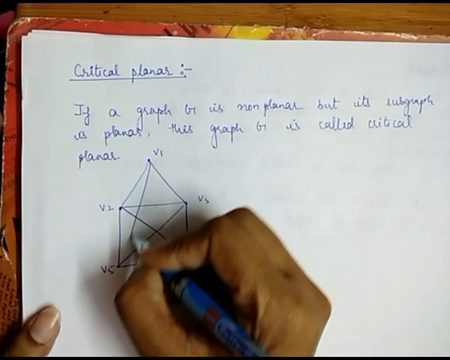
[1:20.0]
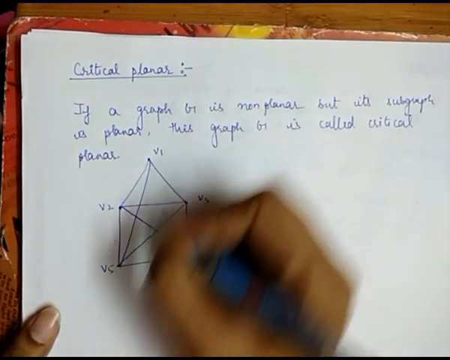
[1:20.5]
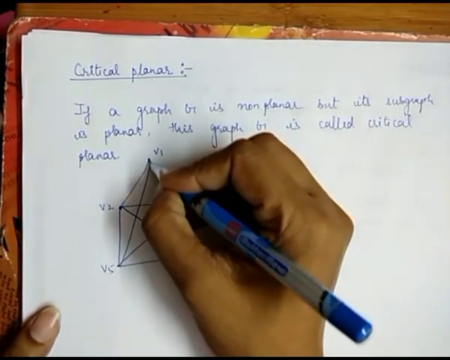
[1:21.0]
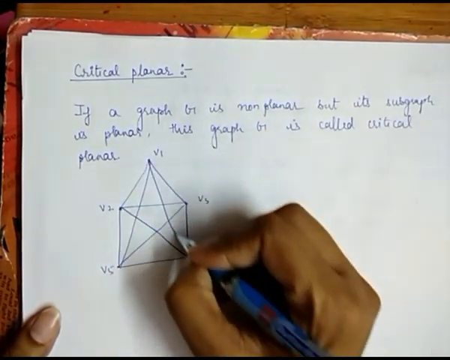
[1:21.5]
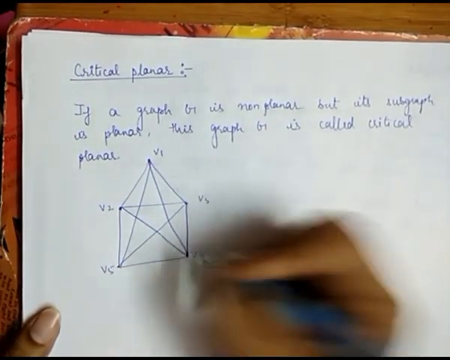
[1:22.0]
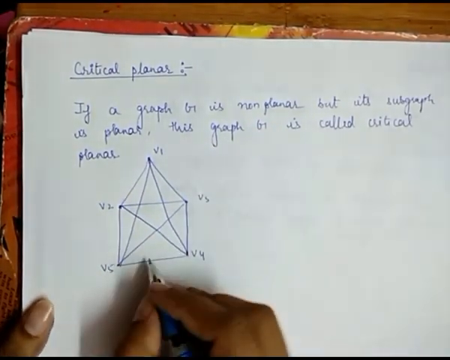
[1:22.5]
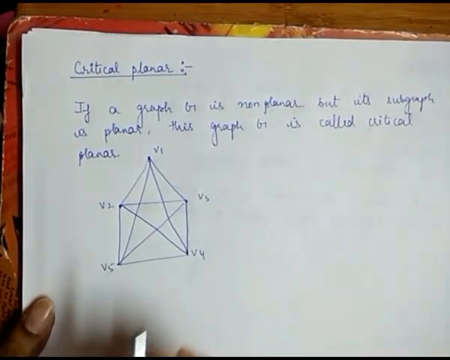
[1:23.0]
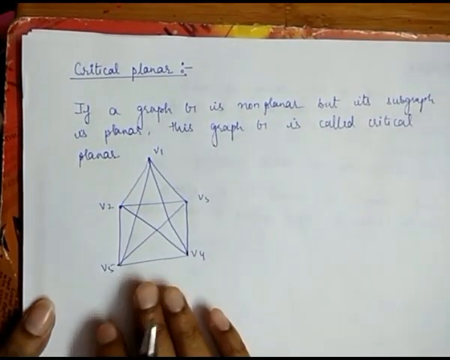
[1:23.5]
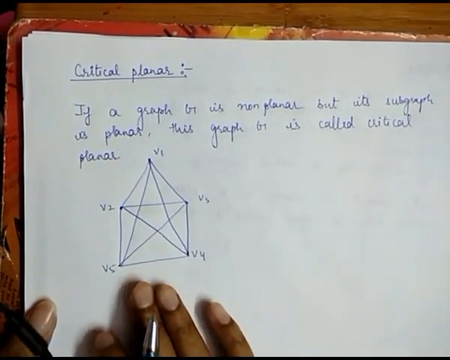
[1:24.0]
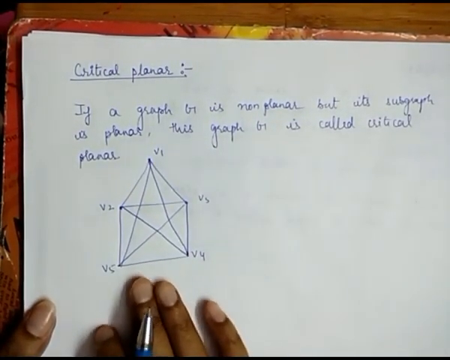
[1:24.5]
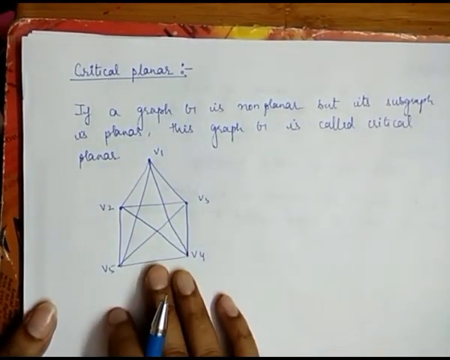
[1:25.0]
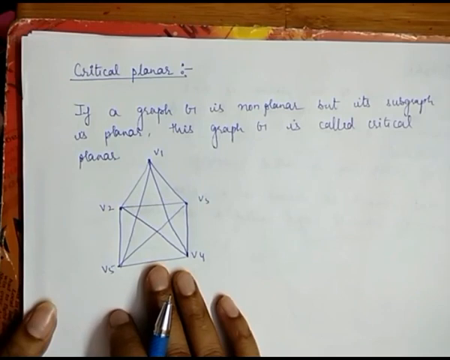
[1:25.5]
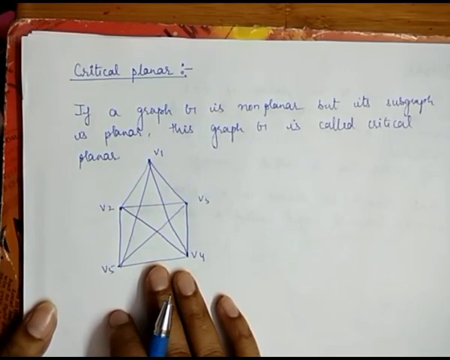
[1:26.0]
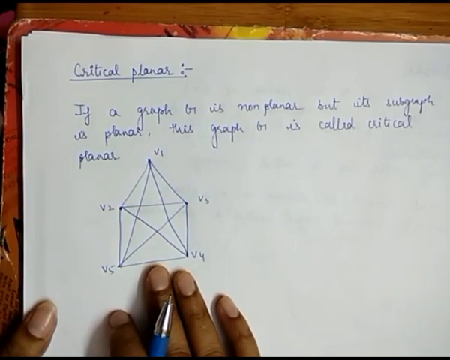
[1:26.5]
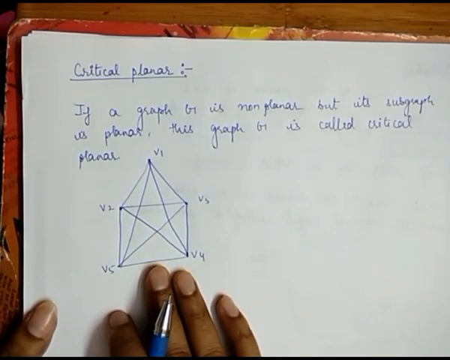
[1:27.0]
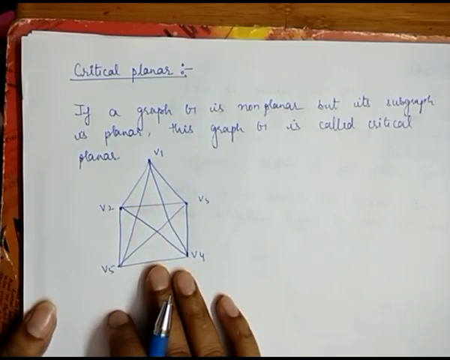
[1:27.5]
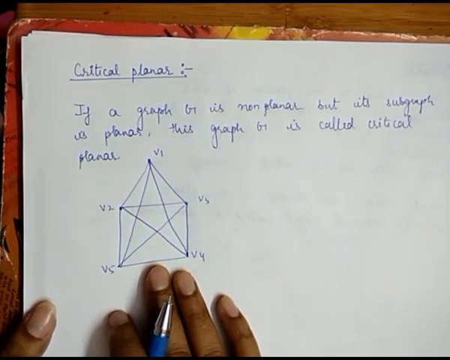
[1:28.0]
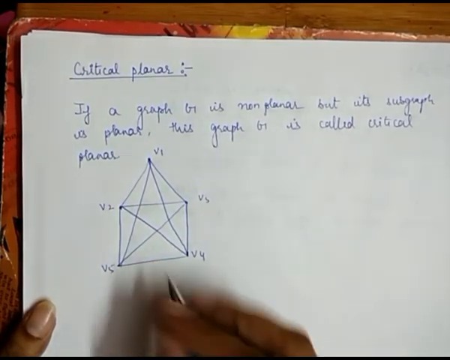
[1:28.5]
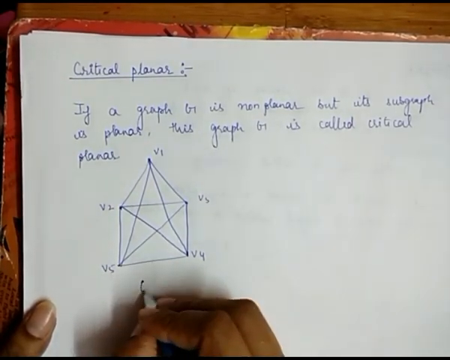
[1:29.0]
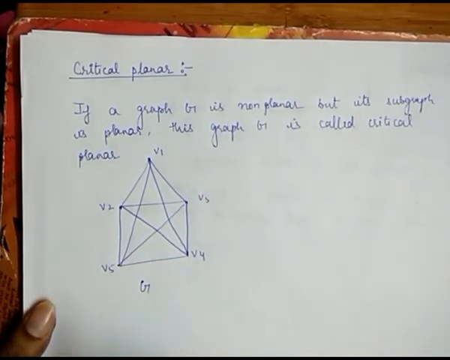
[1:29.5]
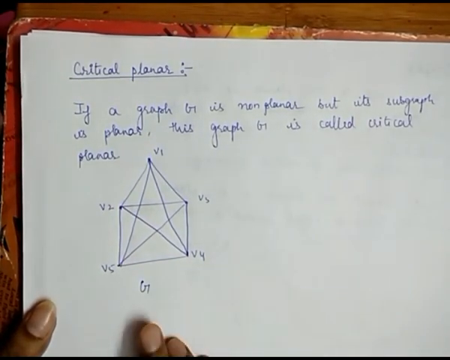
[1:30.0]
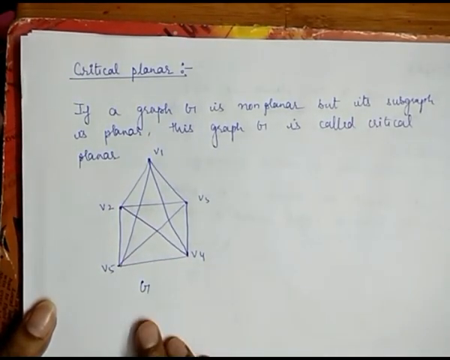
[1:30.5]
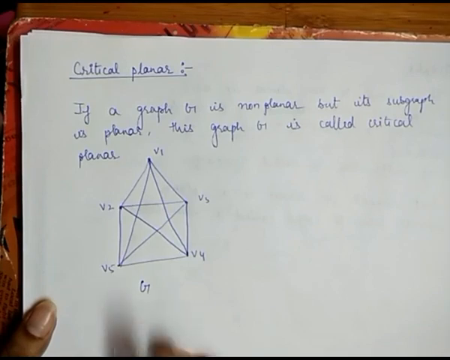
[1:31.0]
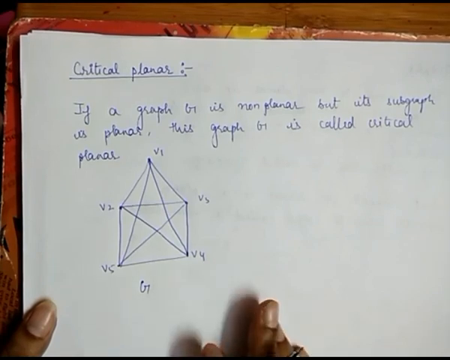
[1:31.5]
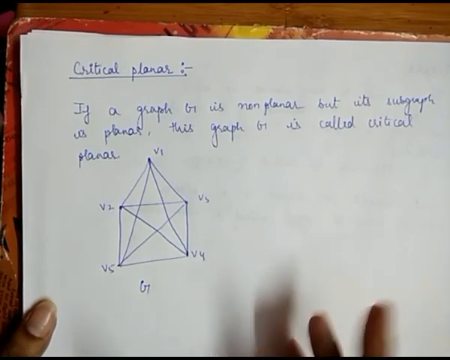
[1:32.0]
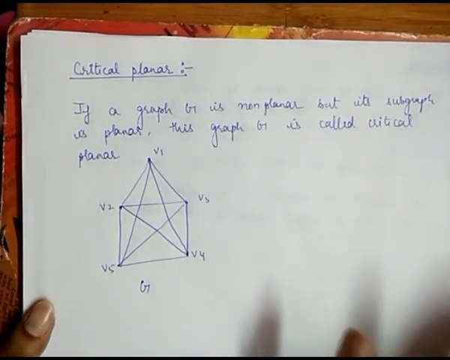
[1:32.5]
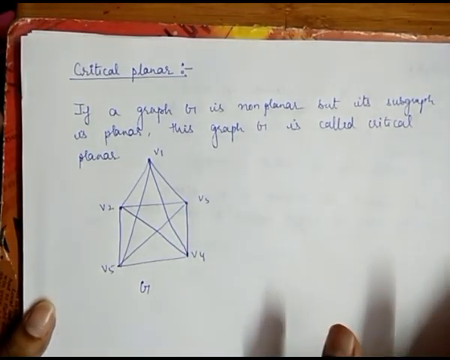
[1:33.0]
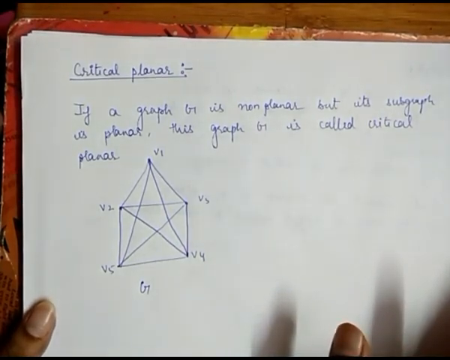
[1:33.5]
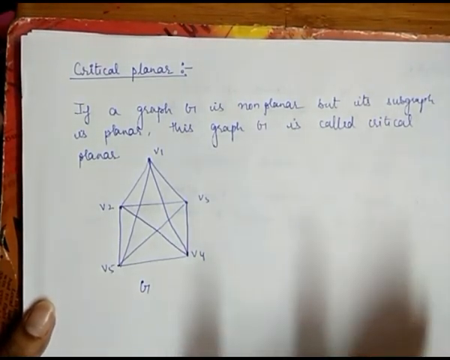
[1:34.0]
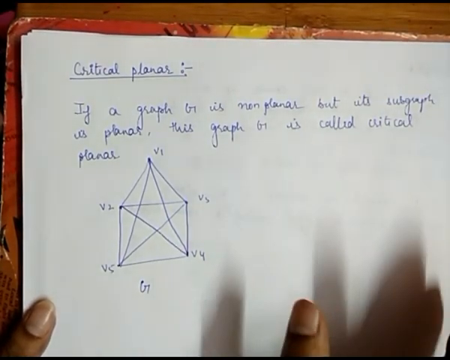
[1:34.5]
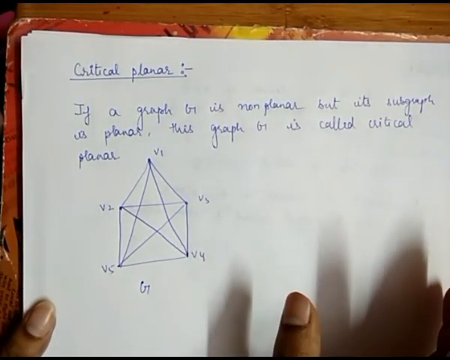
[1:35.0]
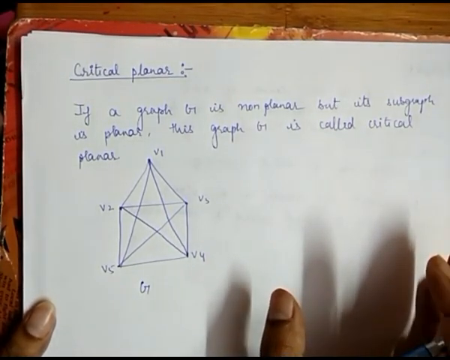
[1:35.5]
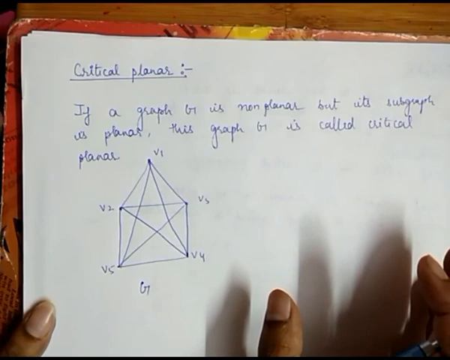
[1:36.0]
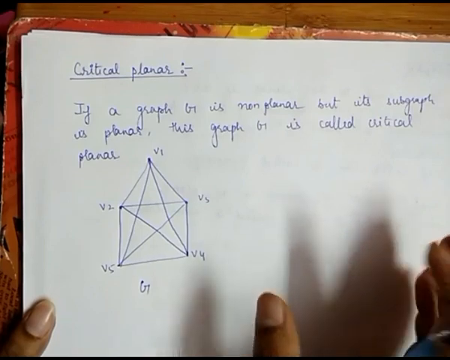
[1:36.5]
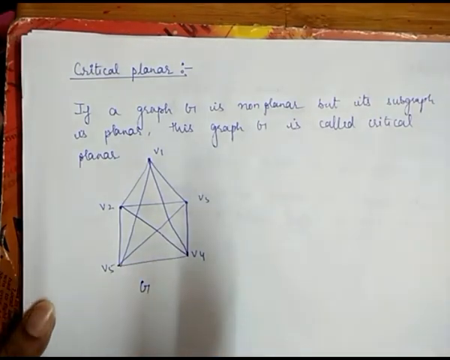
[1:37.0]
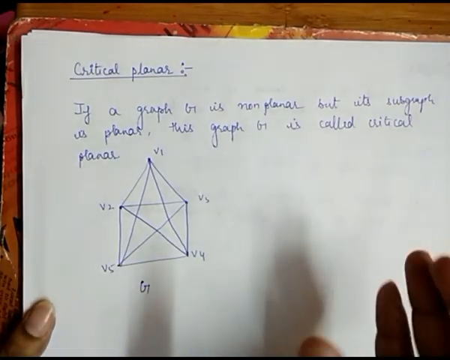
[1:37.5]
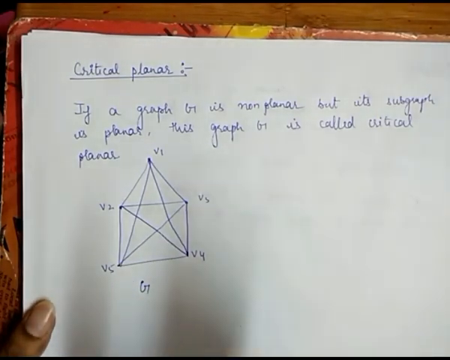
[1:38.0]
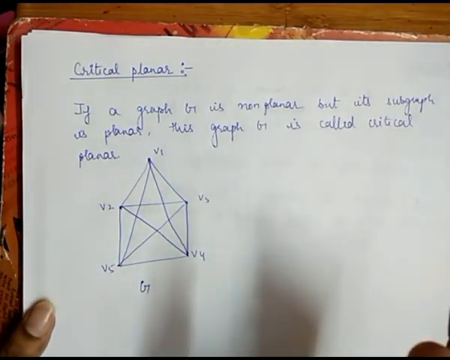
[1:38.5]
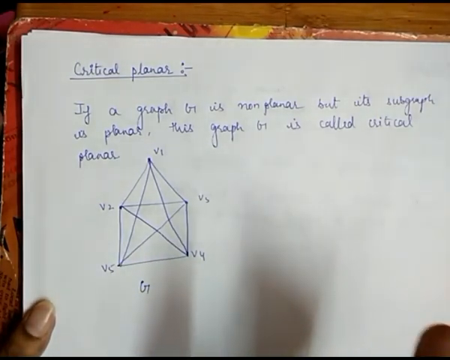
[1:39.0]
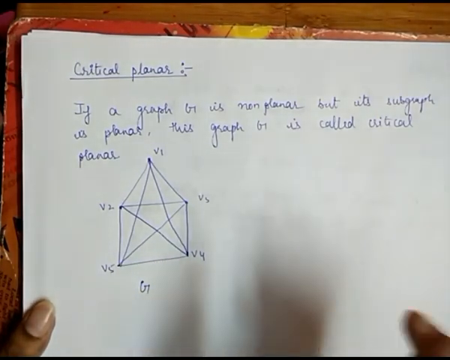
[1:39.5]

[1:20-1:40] After drawing the line from V1 to V5, the woman draws a line from V1 to V4, creating a star in the middle of her house shape. She points her pen at the bottom middle between V4 and V5, then taps all four fingers of her right hand on the paper below the shape, continuing to do so and then leaving her hand resting there as if explaining something. Below the shape she writes the letter G, and she gestures by placing her hand down, picking it up and turning it over, with just her fingertips visible, as if explaining what she is doing or why.